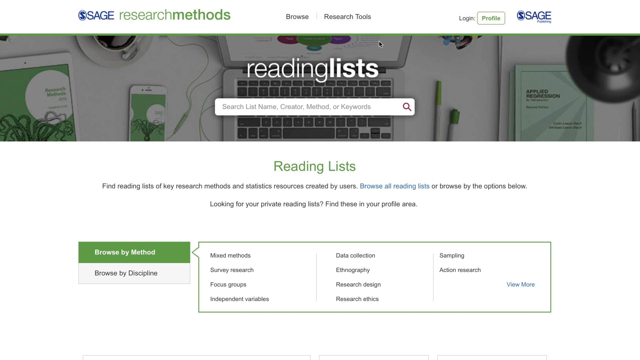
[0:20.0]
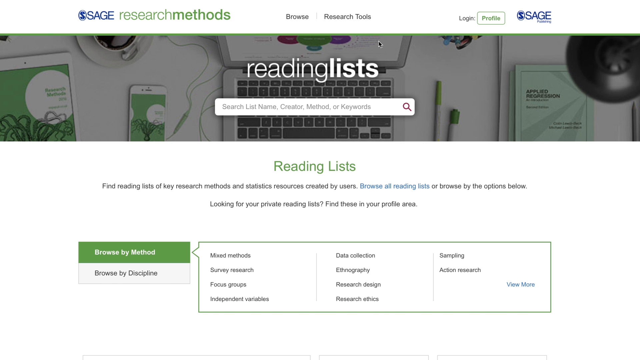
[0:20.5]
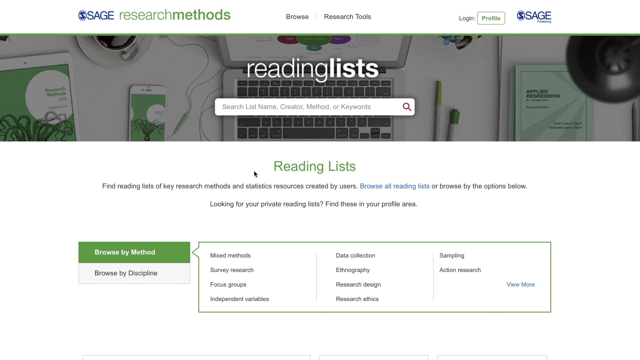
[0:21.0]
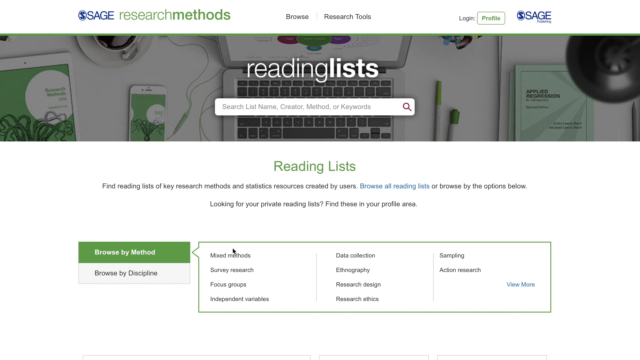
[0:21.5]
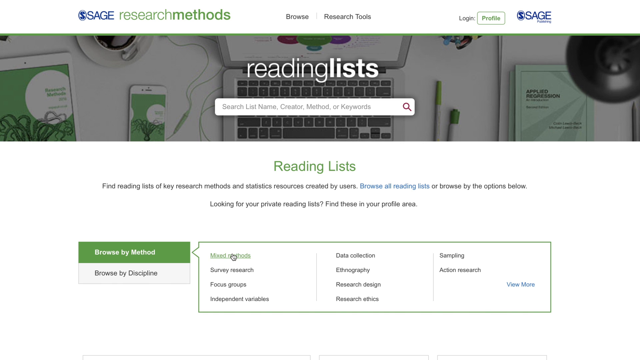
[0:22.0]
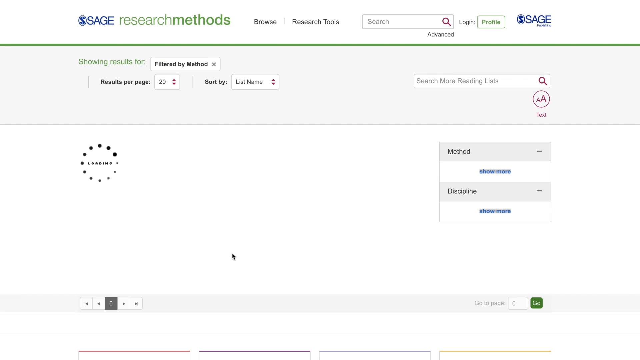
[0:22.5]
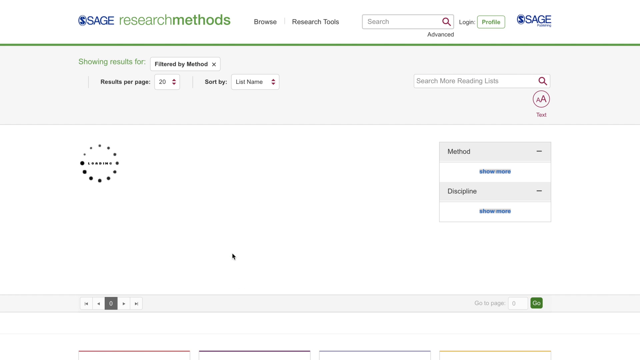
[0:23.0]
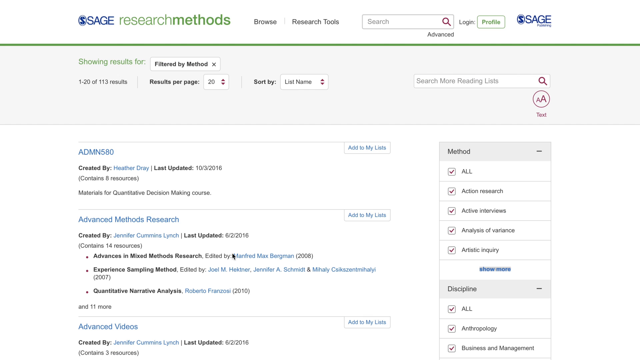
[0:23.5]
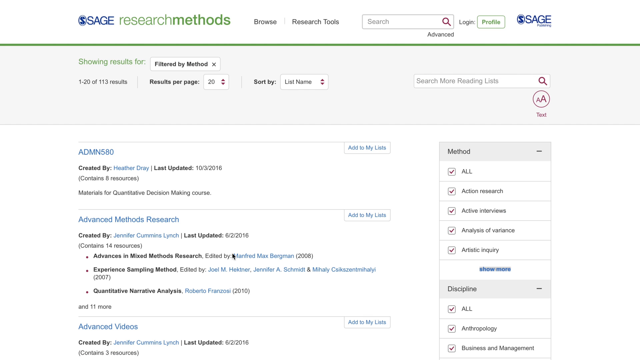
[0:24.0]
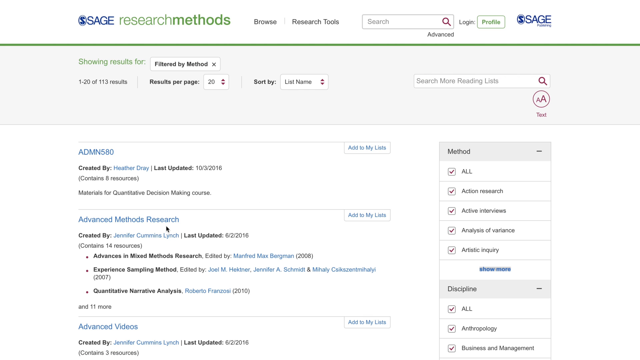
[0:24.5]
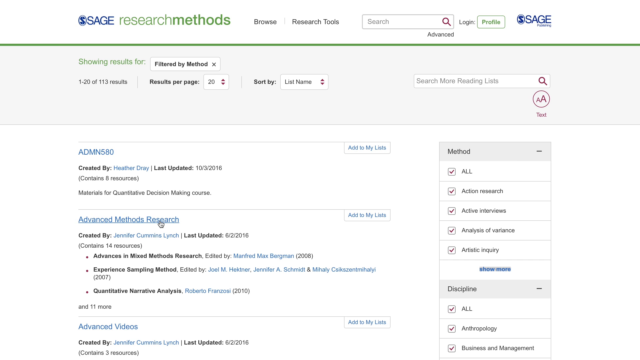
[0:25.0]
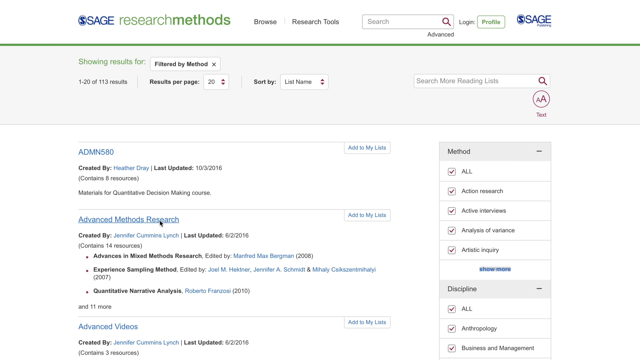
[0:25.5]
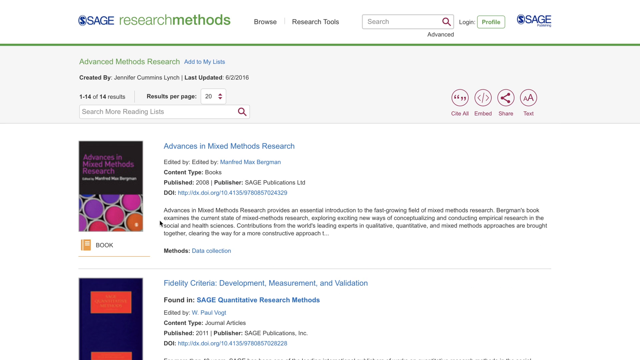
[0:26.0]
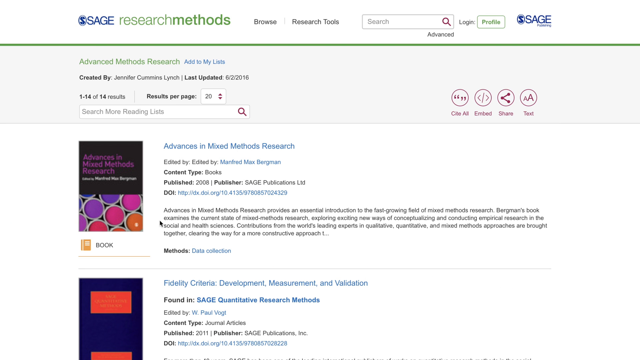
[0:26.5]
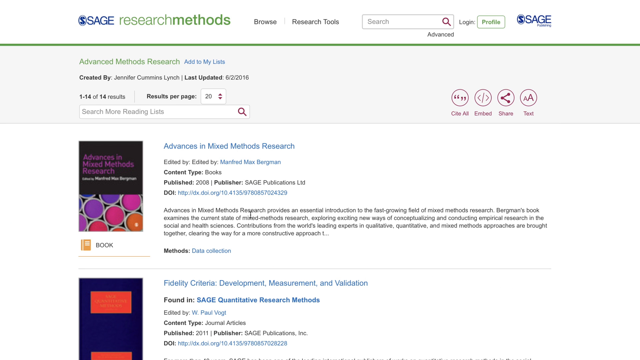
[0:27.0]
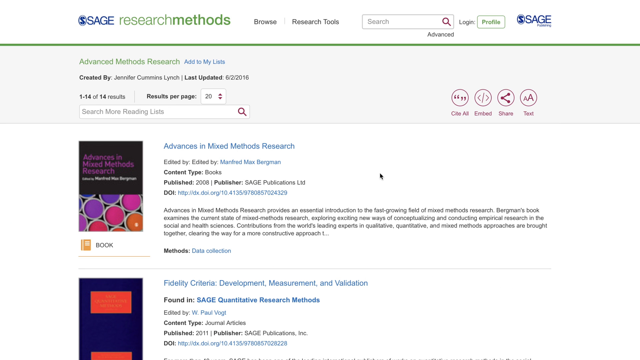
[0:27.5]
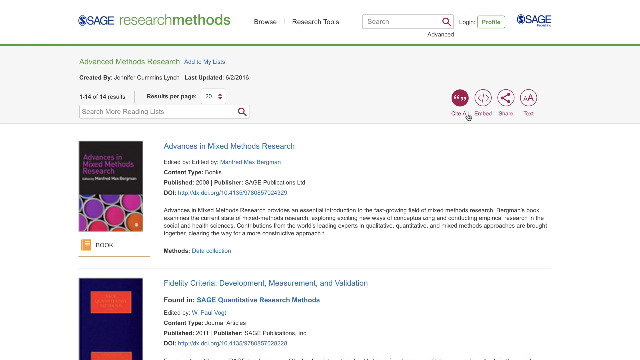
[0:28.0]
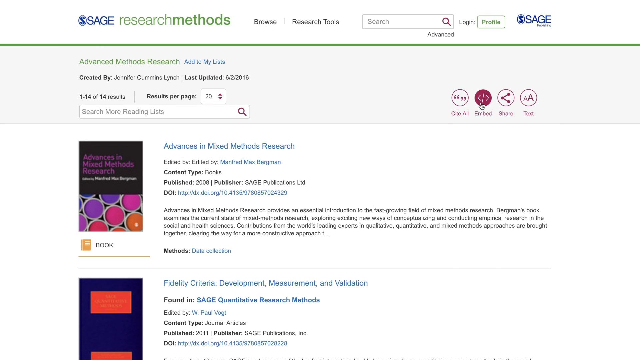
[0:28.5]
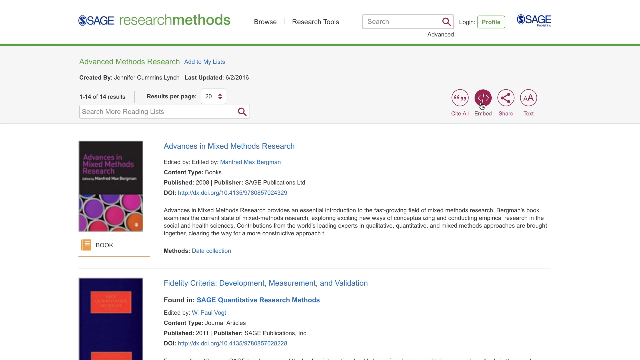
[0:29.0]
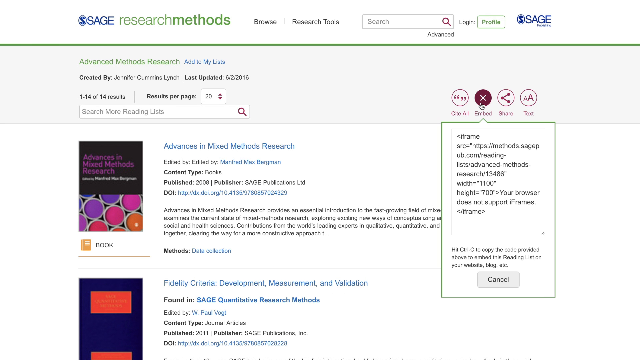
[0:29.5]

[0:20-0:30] A website shows a reading list and a search button.